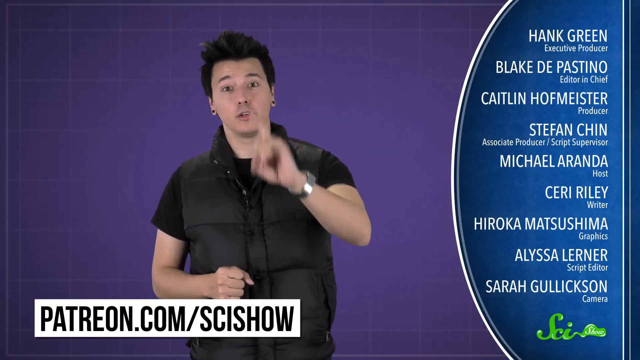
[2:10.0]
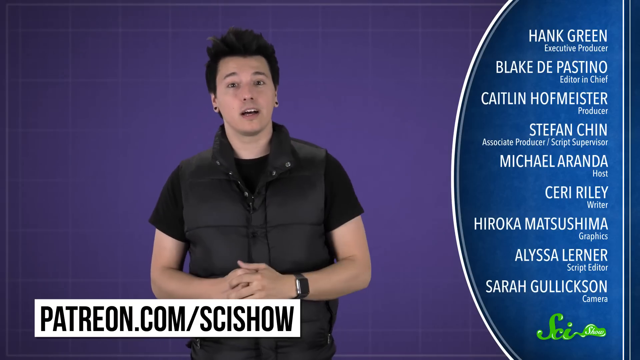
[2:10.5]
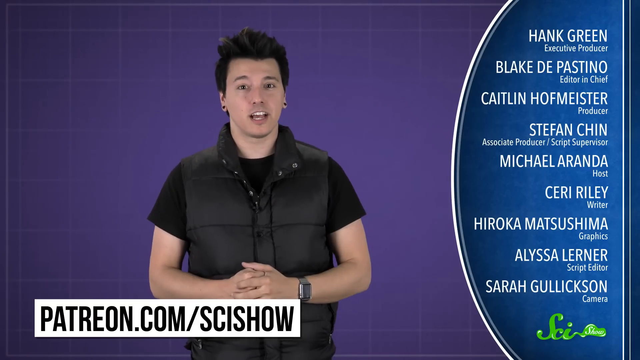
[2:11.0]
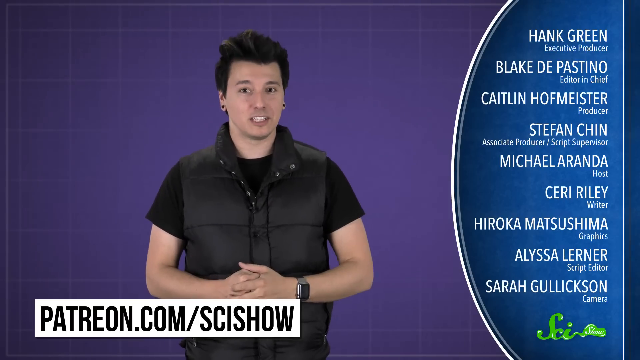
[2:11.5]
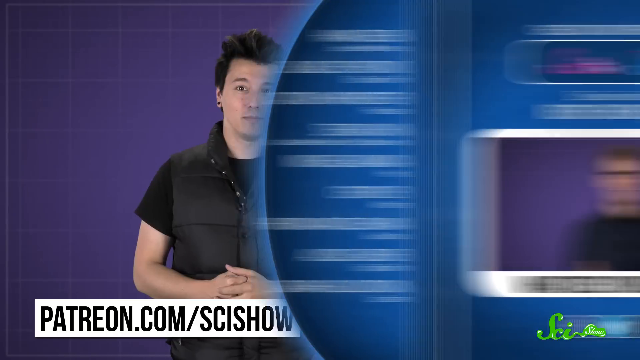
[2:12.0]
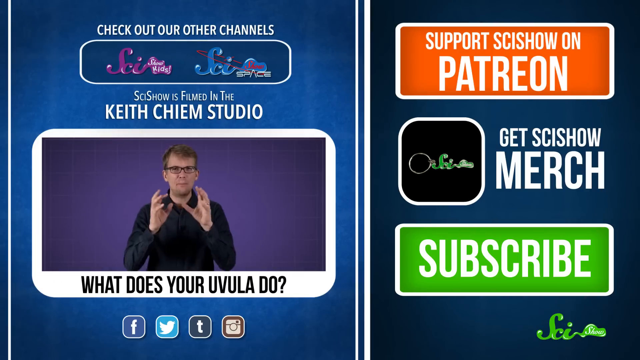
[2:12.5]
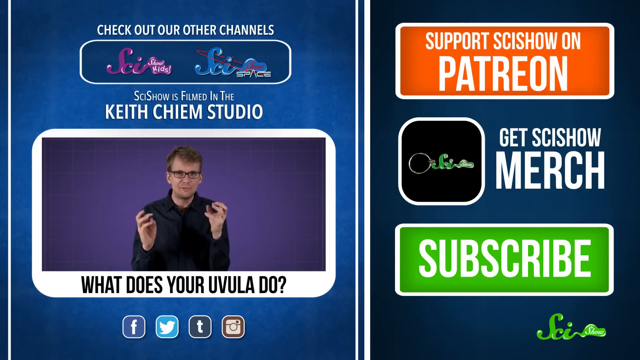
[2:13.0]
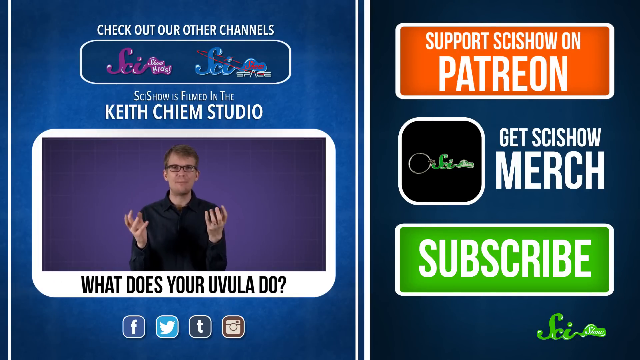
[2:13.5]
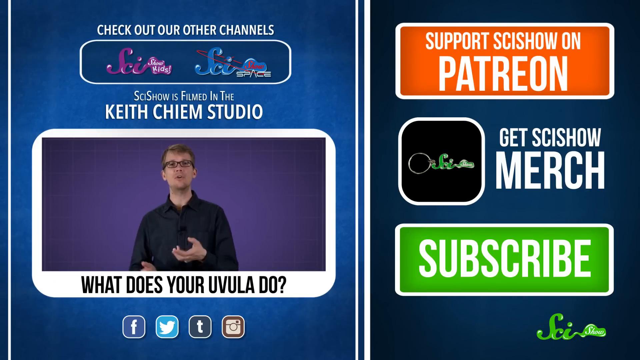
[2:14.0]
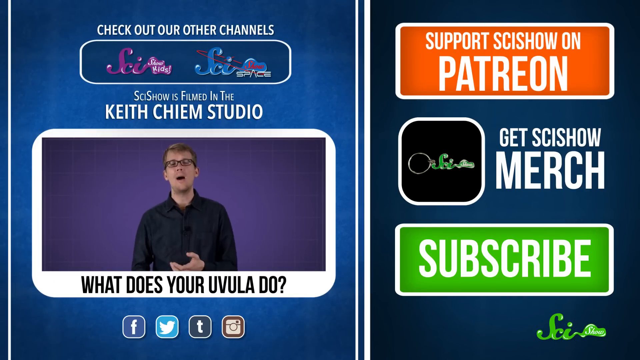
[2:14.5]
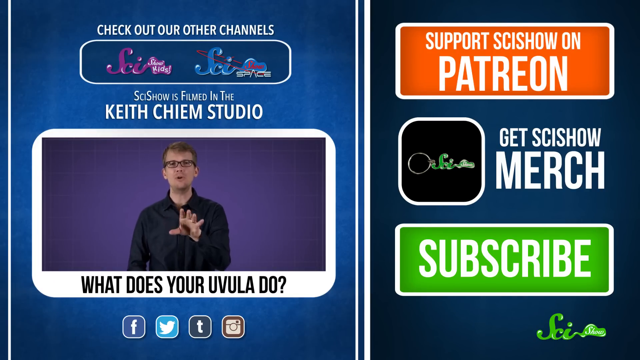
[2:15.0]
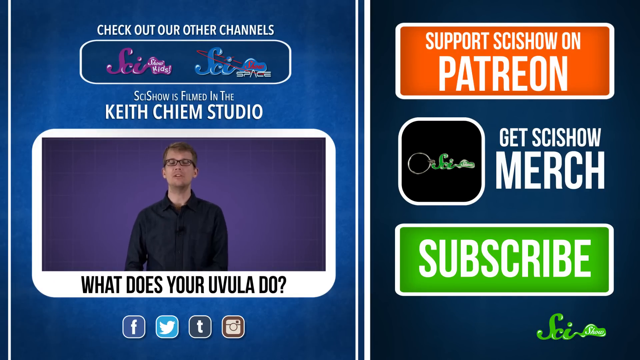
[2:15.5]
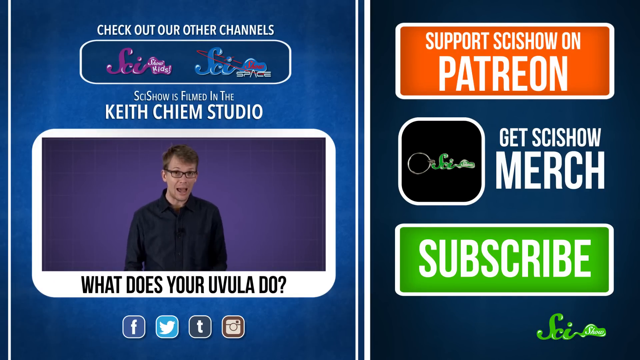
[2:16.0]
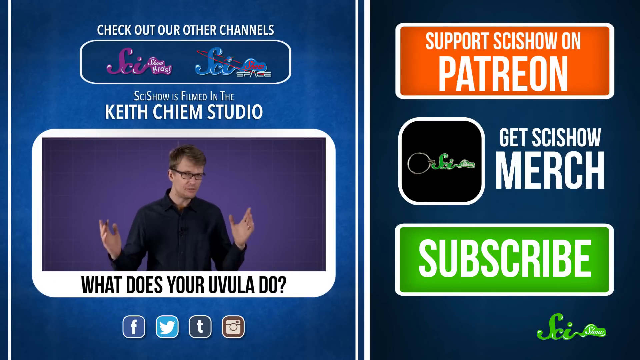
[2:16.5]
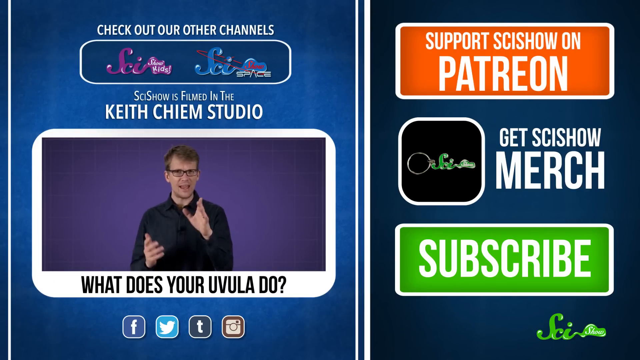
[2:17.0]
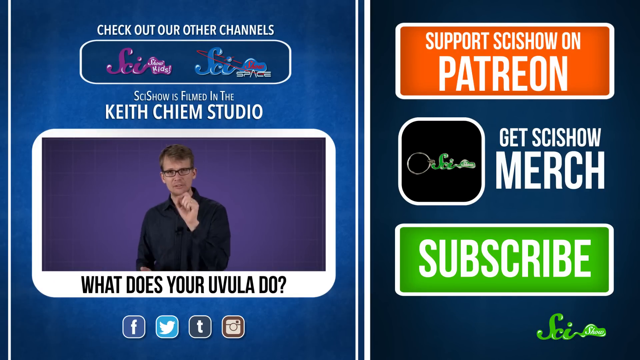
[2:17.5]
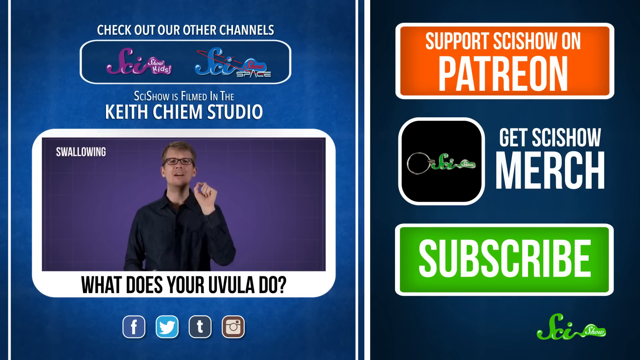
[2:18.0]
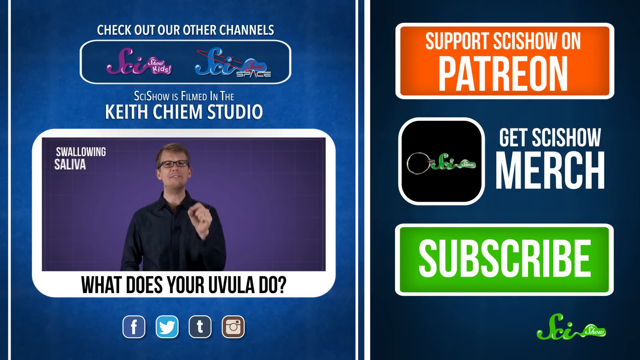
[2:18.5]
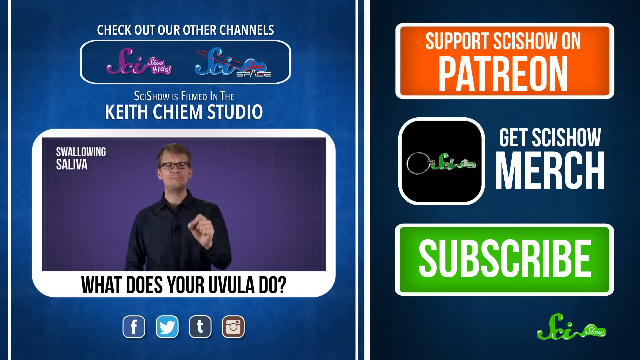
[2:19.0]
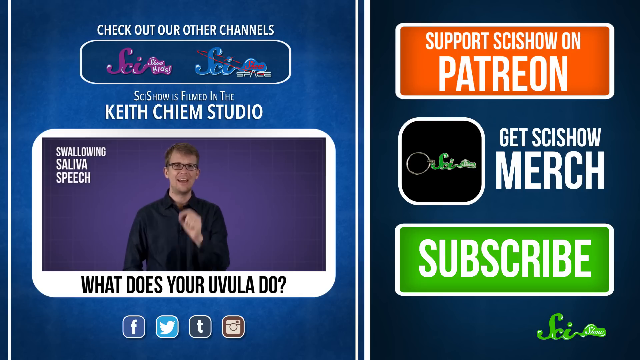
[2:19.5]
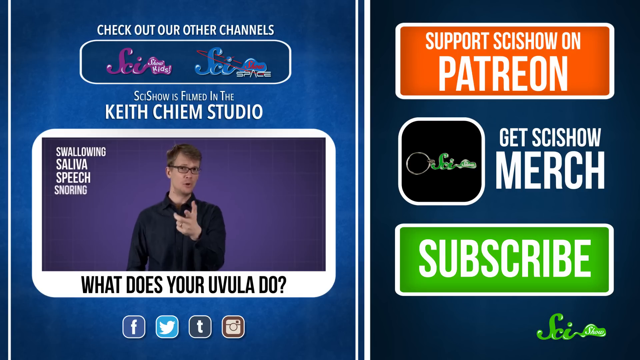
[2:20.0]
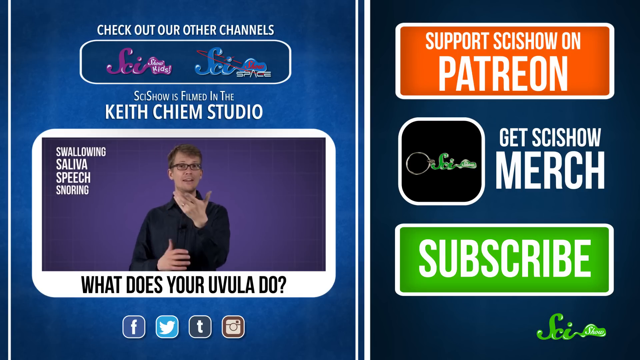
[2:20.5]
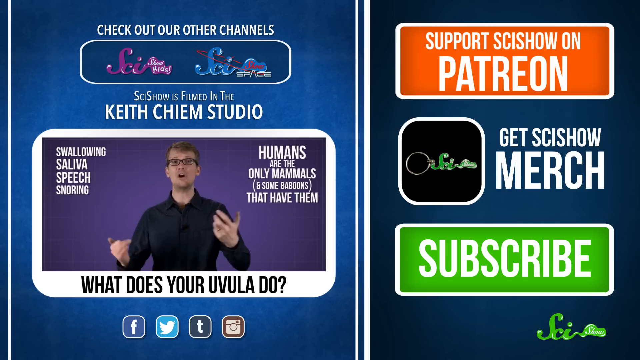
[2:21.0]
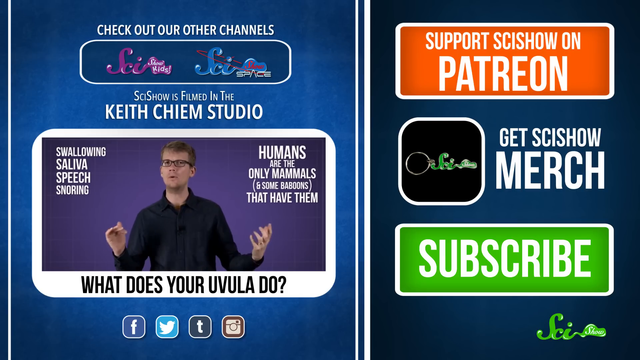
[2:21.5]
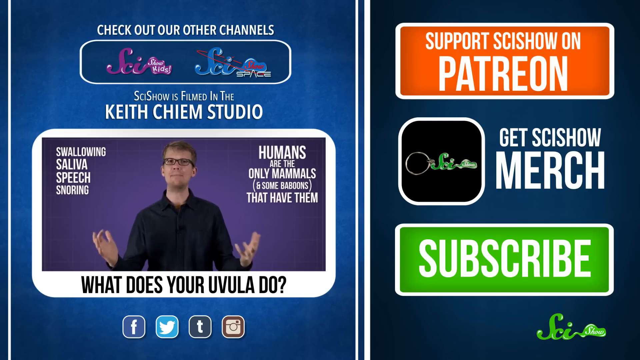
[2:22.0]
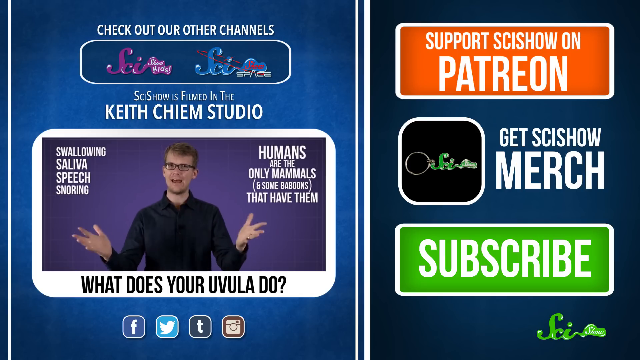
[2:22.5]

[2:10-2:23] A man talks directly to the audience. The video then moves to a credits-like screen with a different man in the left-hand section; he has blonde hair, black glasses, and a black shirt. Text at the bottom reads "what is your uvula doing", and text reads "Keith Kemp Studio". On the right-hand side, text reads "support SciShow on Patreon", white text on an orange background reads "get SciShow merch", and at the bottom right "subscribe" appears in white text on a green background.